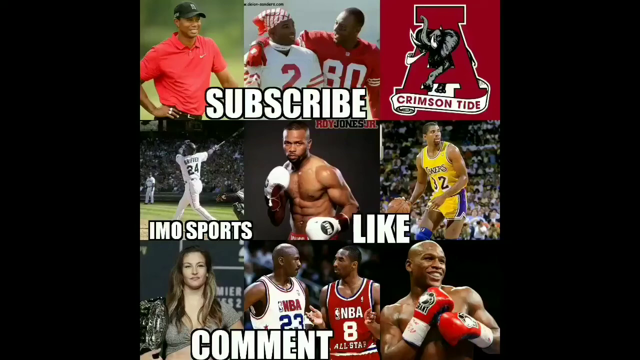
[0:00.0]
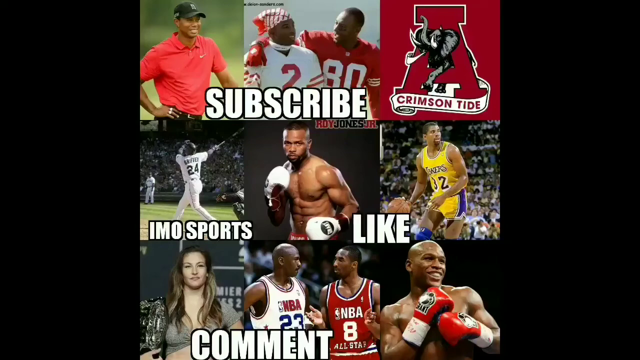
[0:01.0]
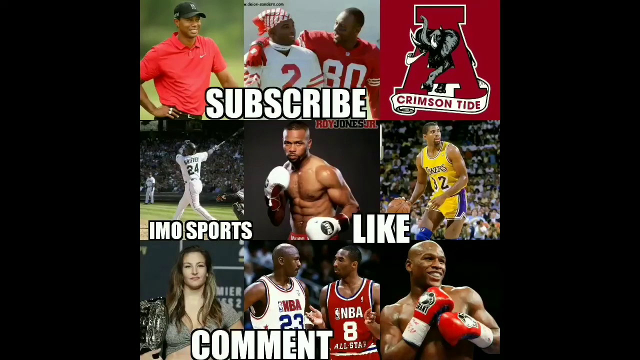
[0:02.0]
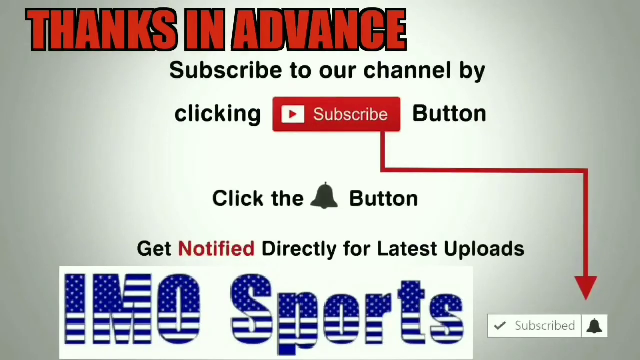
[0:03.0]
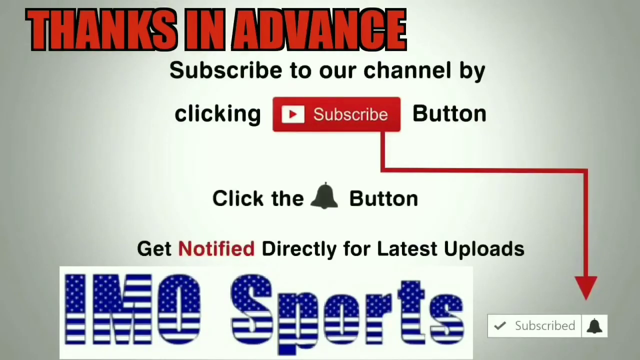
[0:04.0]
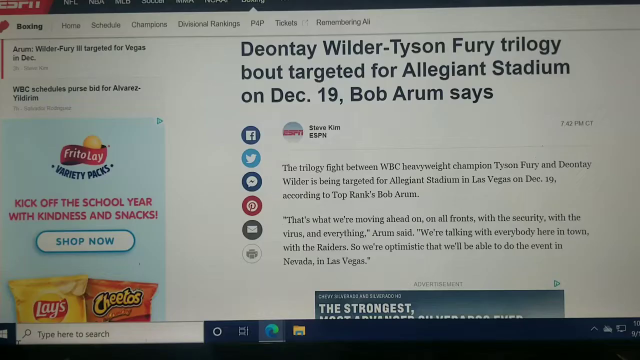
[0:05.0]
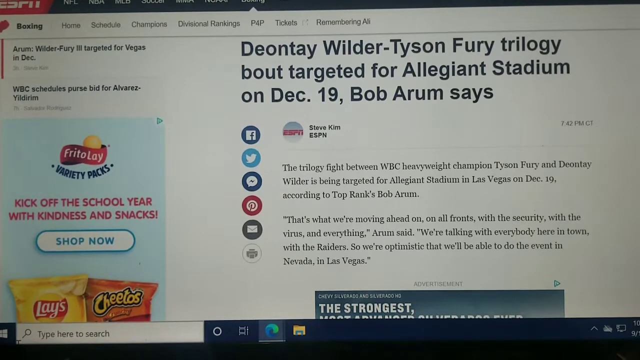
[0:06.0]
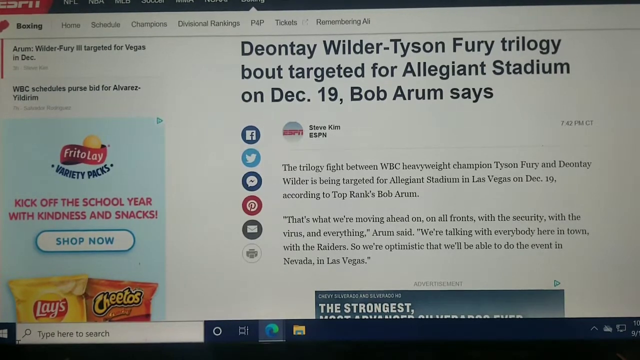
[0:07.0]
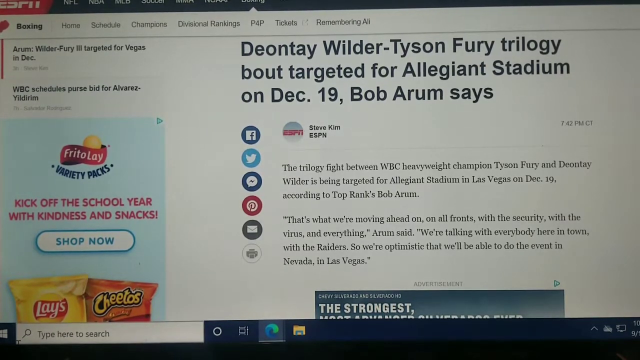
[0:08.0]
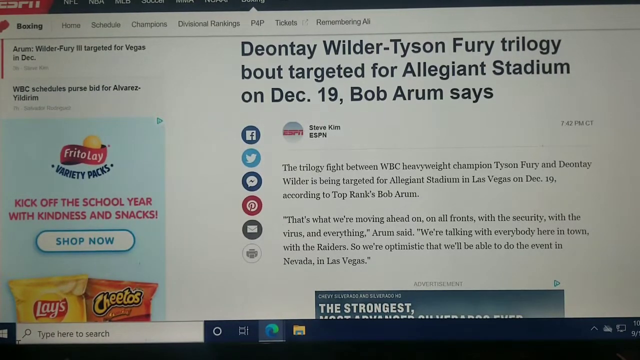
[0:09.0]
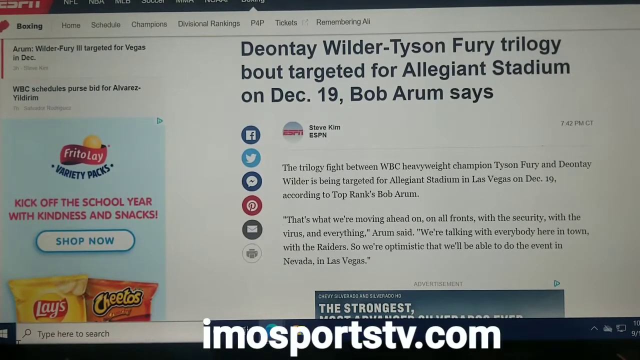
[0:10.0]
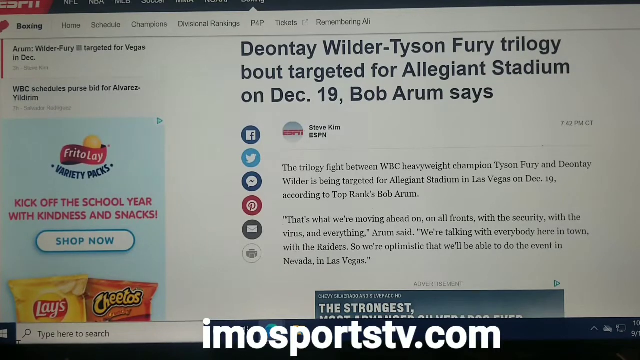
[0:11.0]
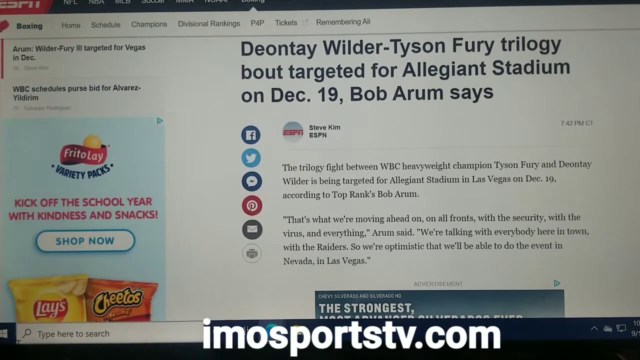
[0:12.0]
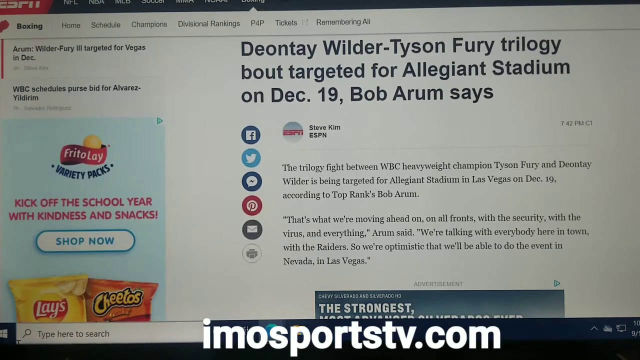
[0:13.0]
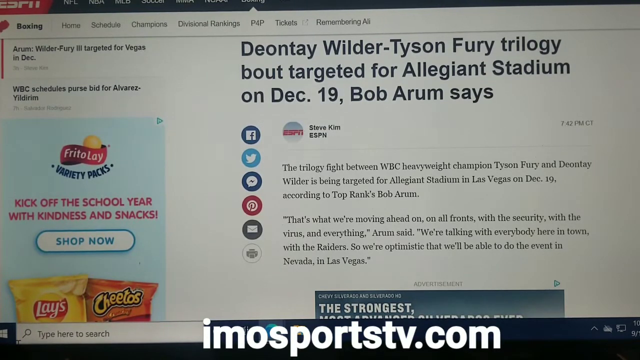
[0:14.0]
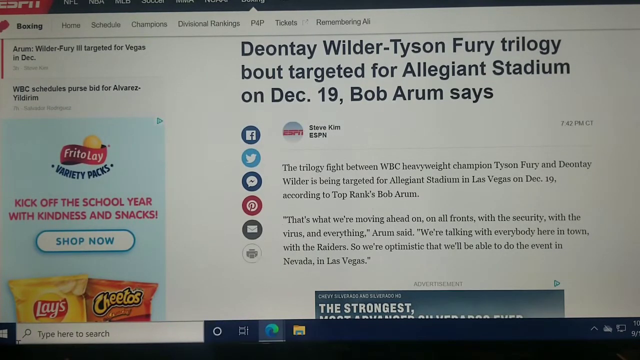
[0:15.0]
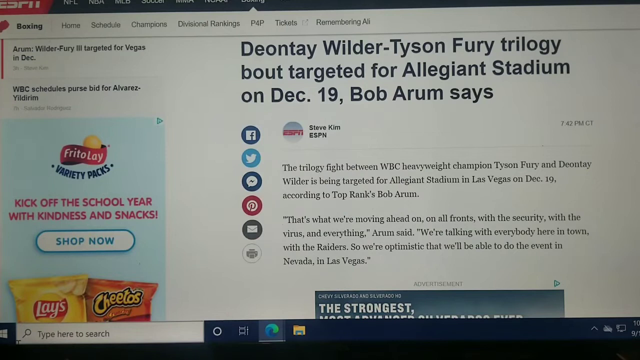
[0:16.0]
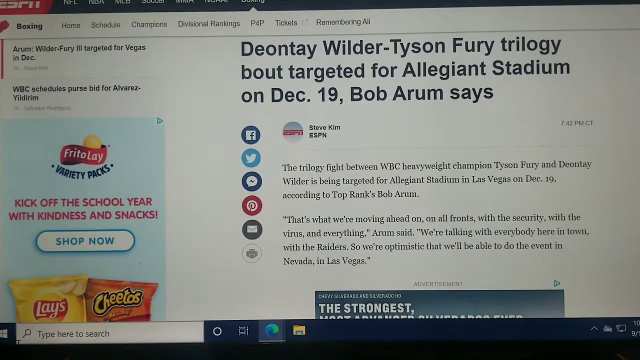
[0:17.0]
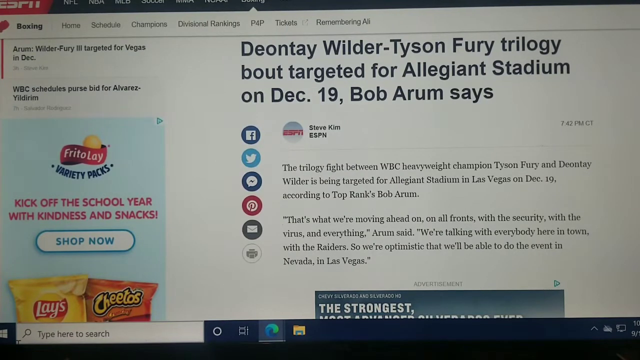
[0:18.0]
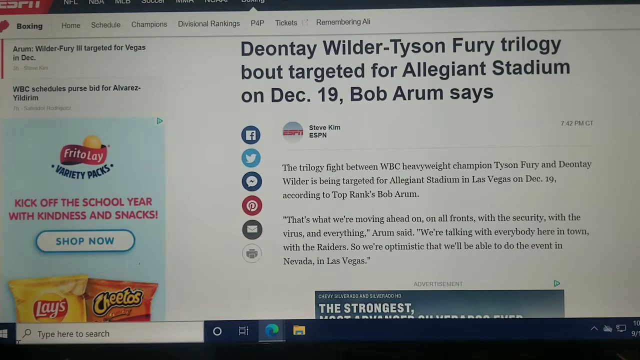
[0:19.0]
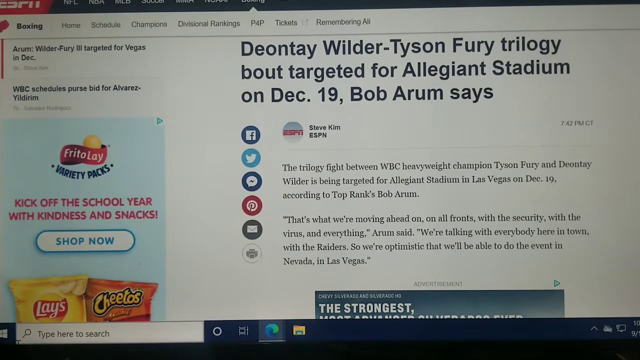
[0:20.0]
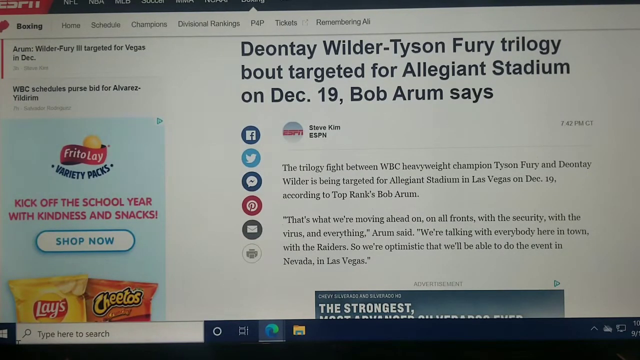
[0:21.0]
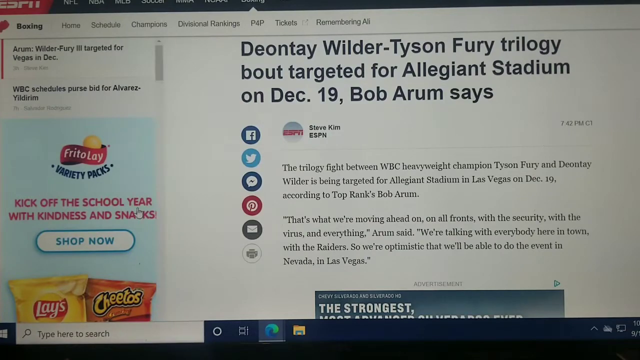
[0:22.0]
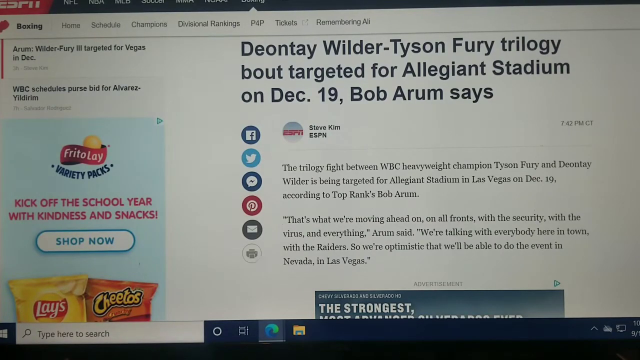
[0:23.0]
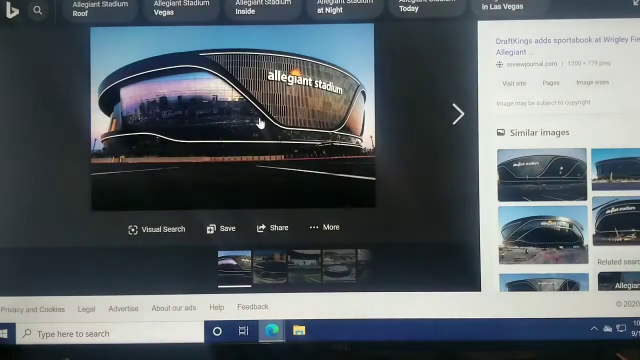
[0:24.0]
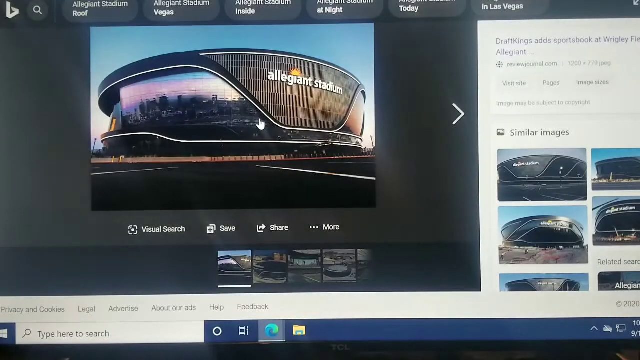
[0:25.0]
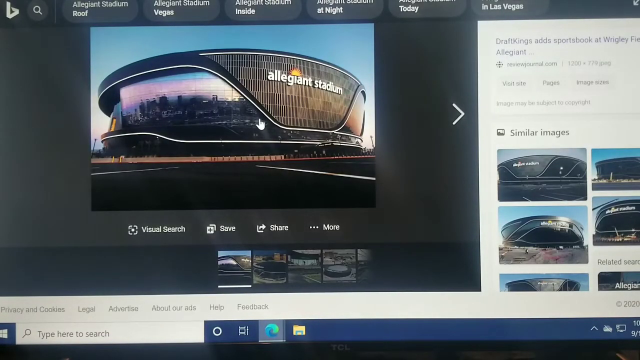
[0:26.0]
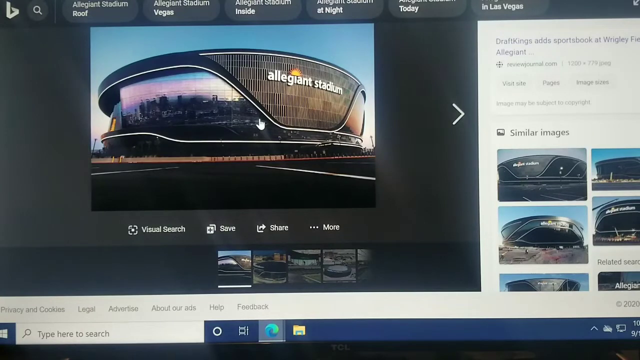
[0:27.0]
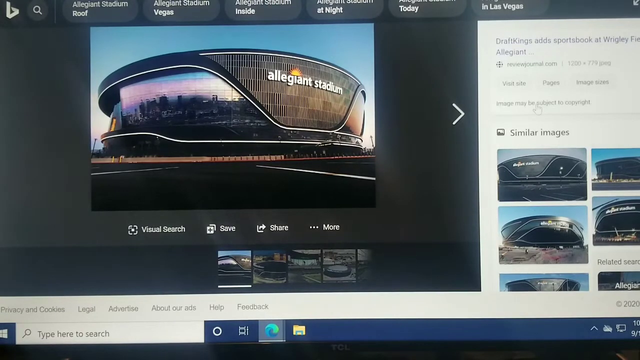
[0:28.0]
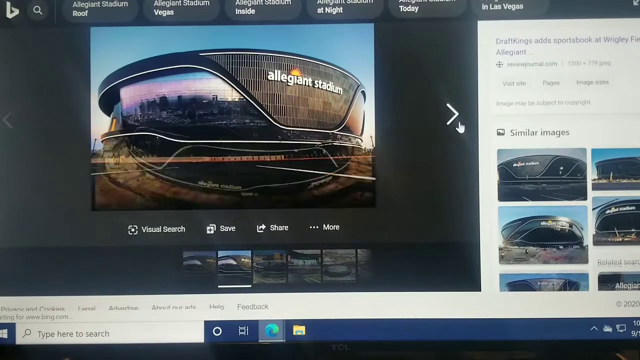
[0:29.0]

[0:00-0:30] The video opens with a couple of screens about liking and subscribing. After that, it looks like someone is filming a news article written by Steve Kim of ESPN, with the view kind of trained on the website. At the bottom of the page there is a search bar. Someone is operating a mouse; the cursor is turned into a hand. They put it at the top of the page and click on something. The website changes to a photo of Allegiant Stadium. The cursor goes to a right arrow button and clicks right where the pointy part is, and the photo changes to a different photo of Allegiant Stadium, apparently the location of a bout.